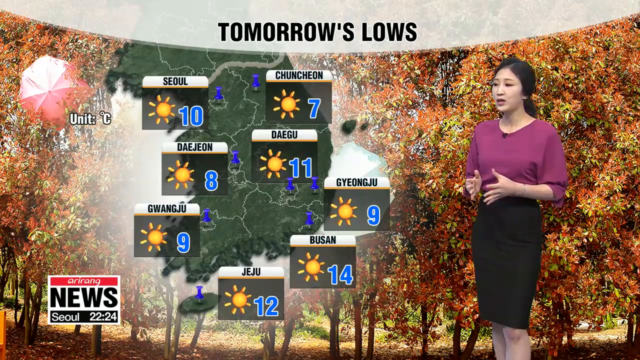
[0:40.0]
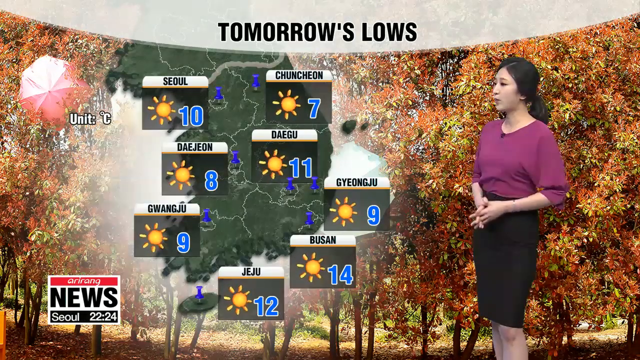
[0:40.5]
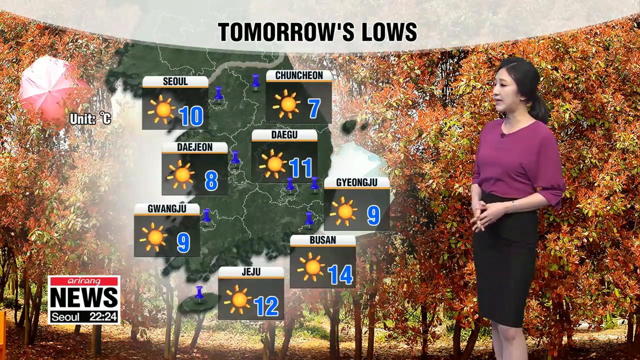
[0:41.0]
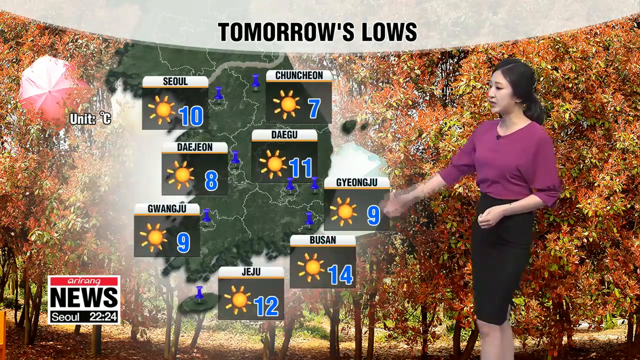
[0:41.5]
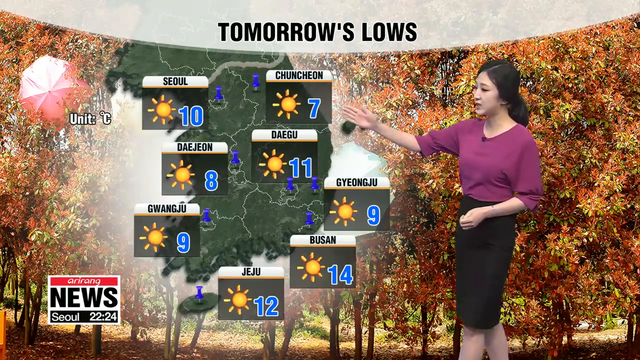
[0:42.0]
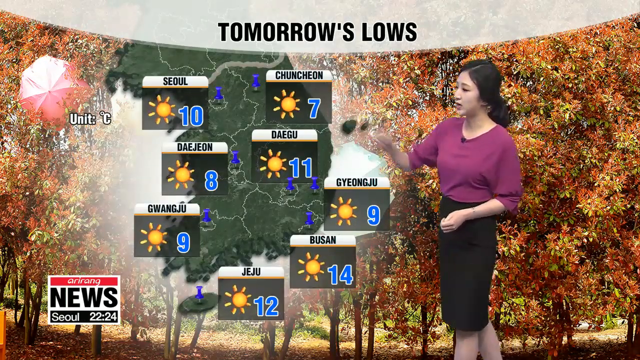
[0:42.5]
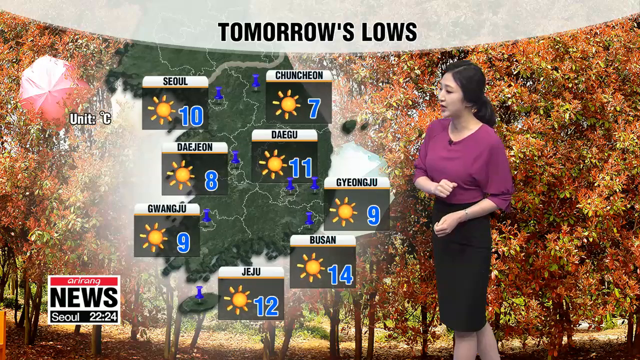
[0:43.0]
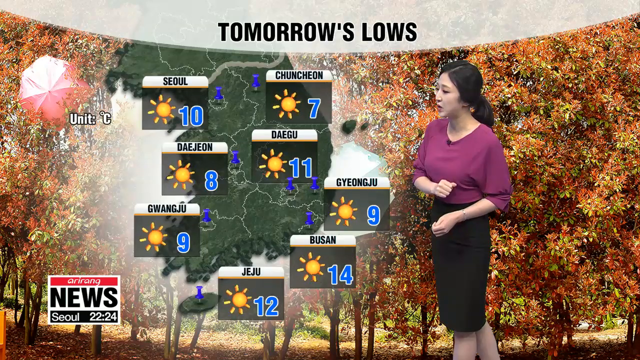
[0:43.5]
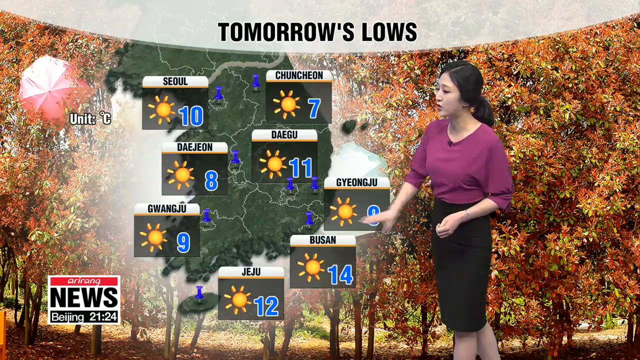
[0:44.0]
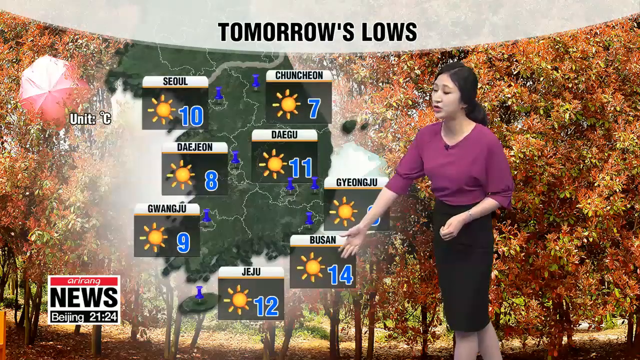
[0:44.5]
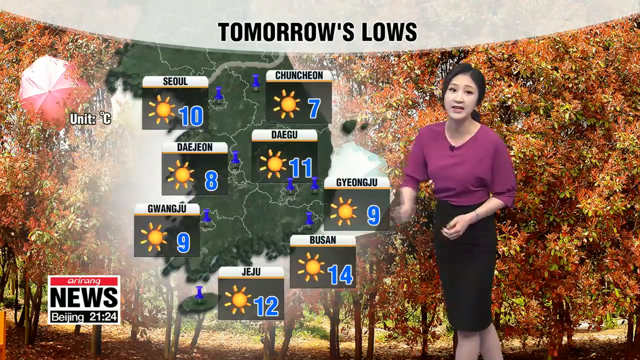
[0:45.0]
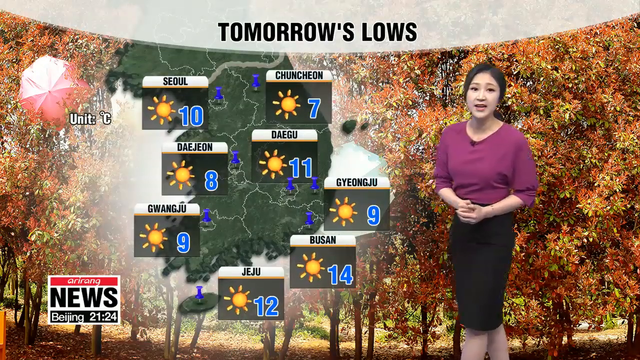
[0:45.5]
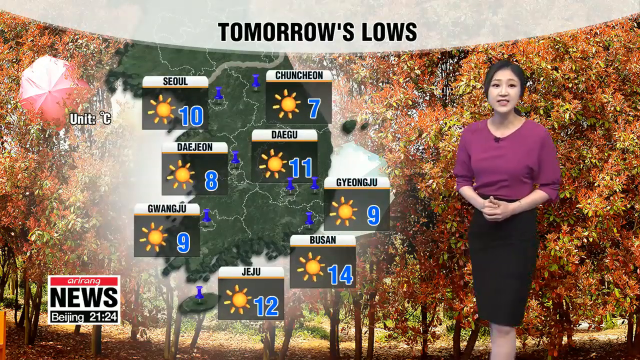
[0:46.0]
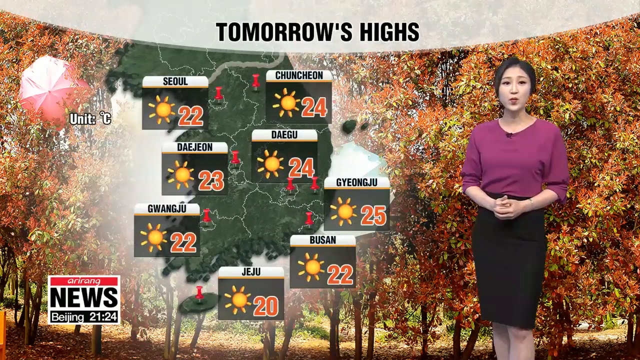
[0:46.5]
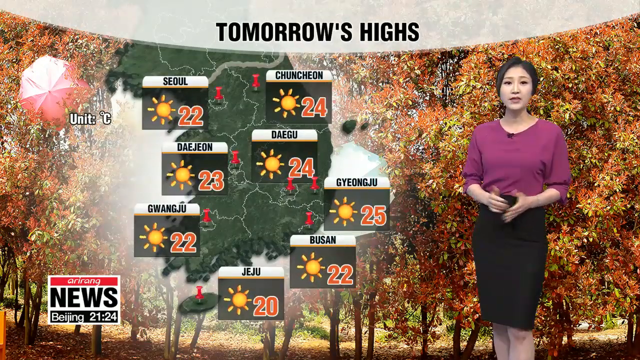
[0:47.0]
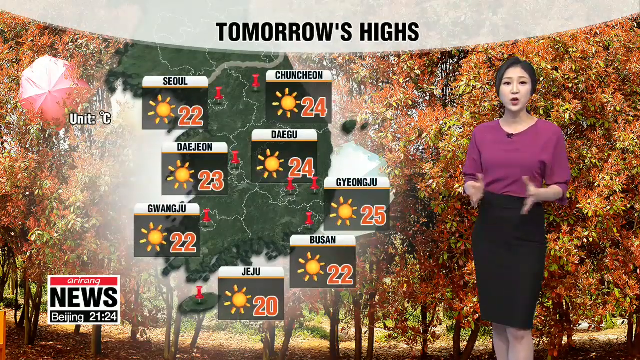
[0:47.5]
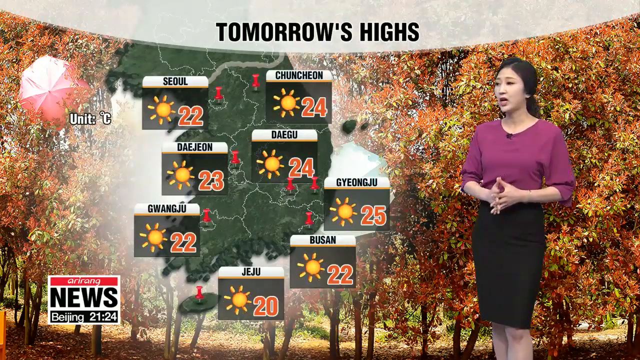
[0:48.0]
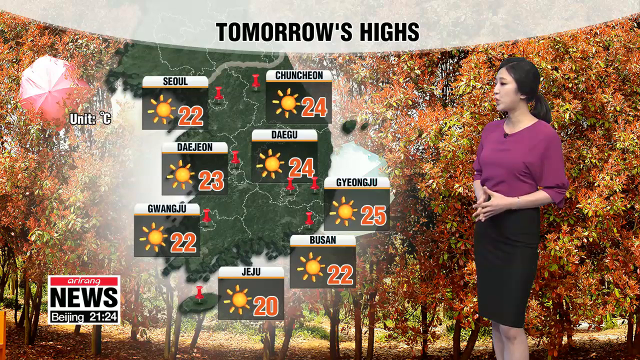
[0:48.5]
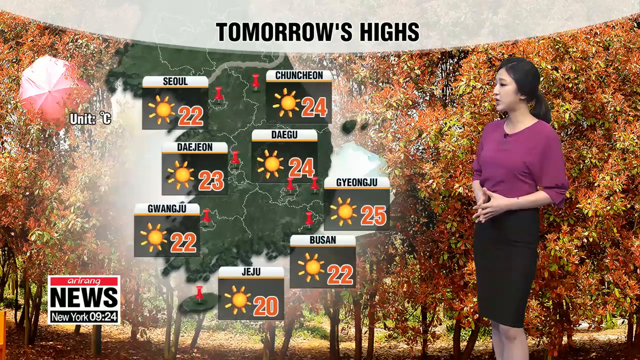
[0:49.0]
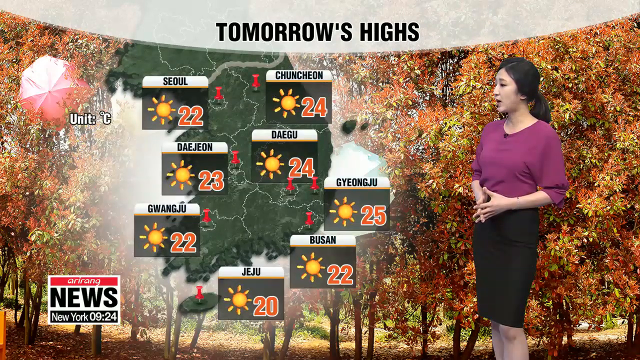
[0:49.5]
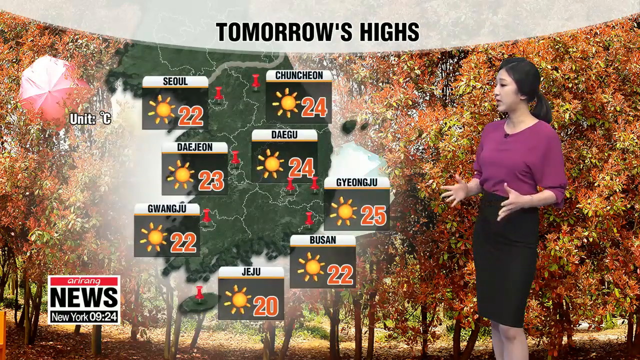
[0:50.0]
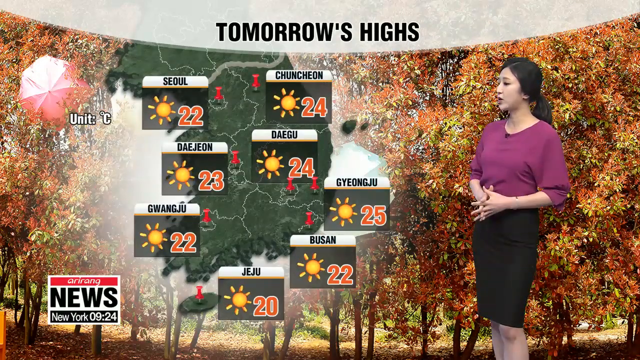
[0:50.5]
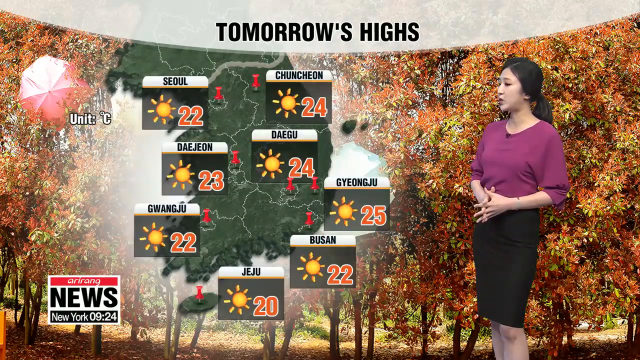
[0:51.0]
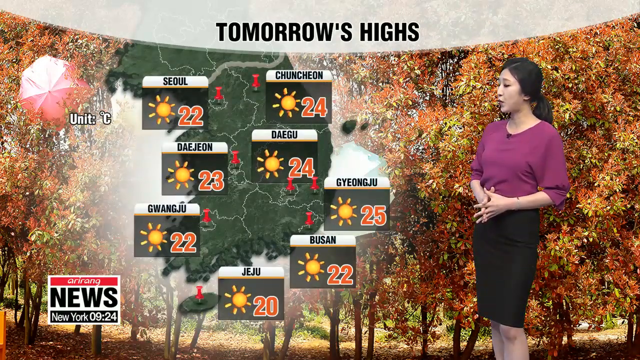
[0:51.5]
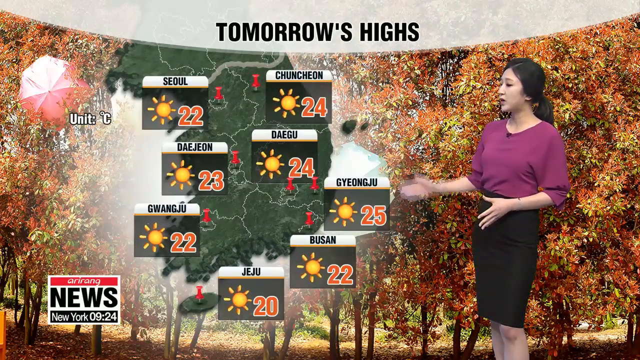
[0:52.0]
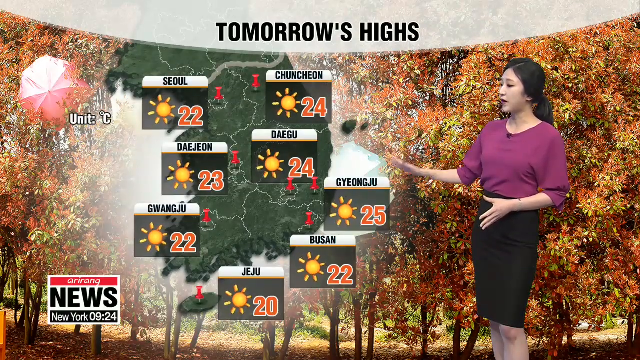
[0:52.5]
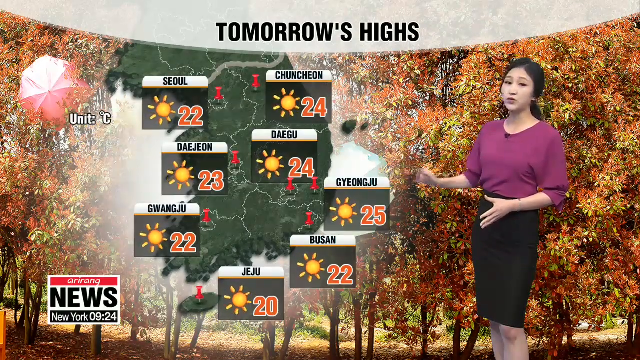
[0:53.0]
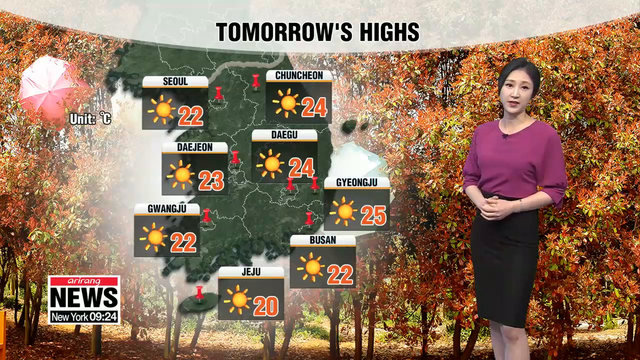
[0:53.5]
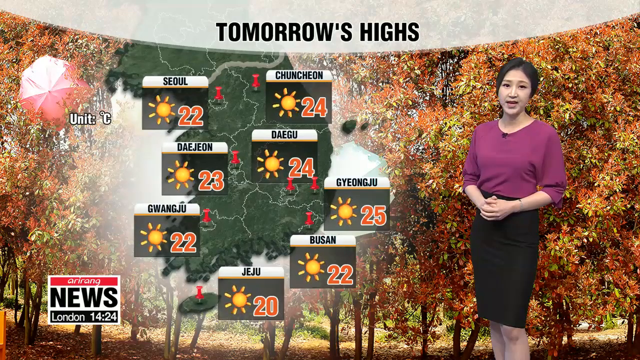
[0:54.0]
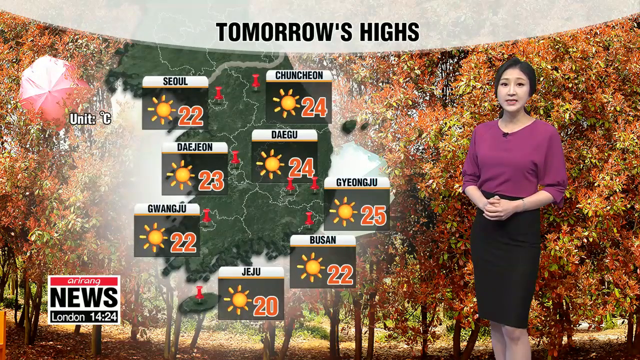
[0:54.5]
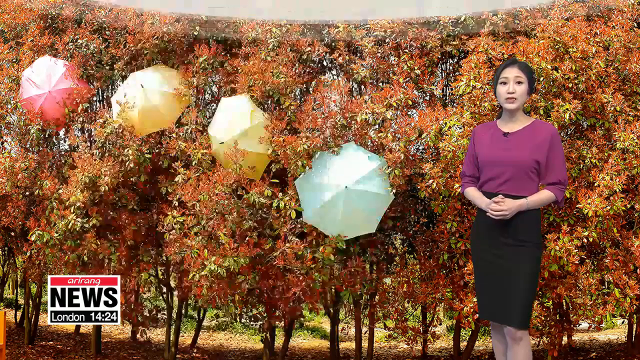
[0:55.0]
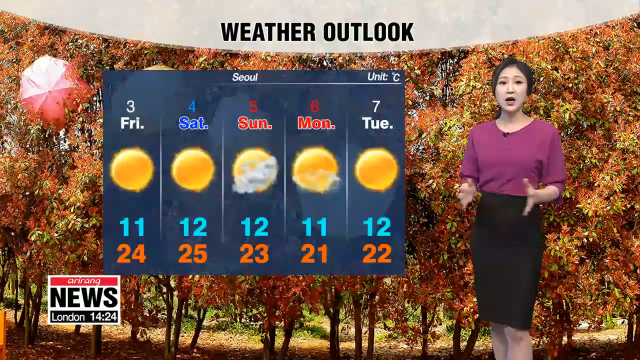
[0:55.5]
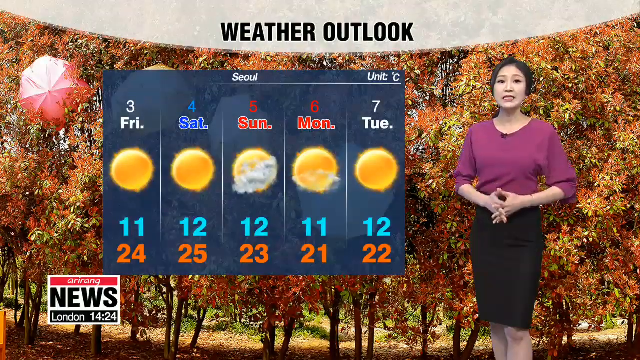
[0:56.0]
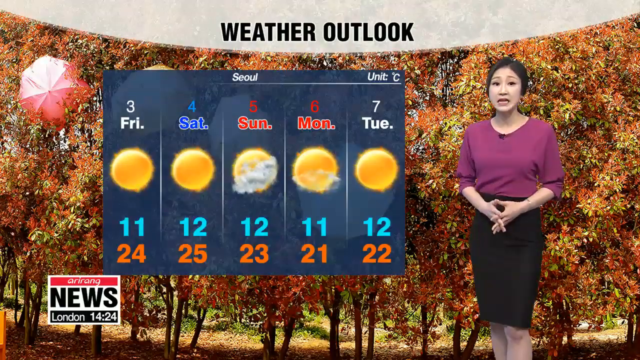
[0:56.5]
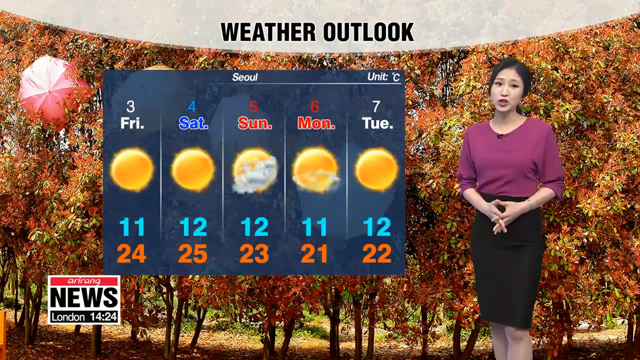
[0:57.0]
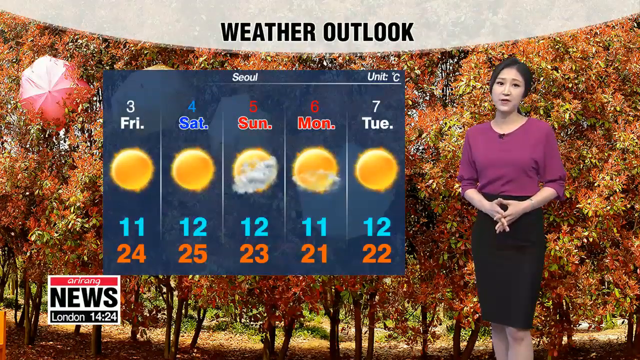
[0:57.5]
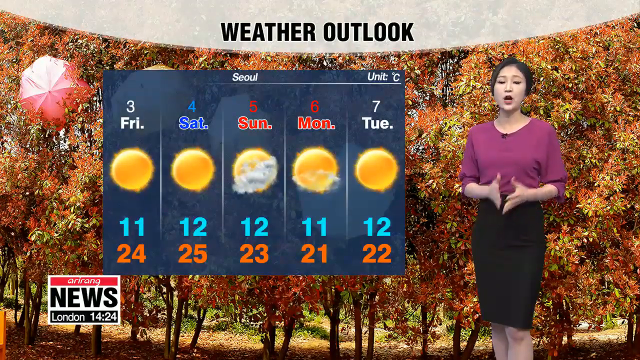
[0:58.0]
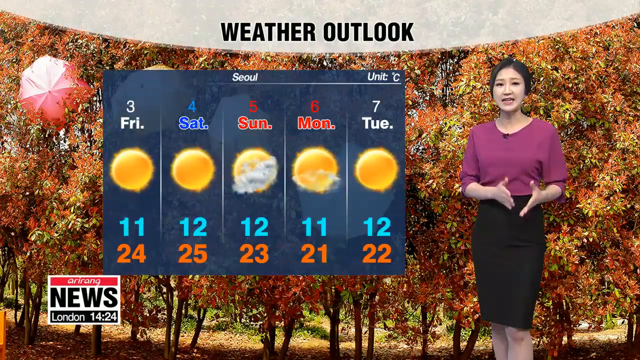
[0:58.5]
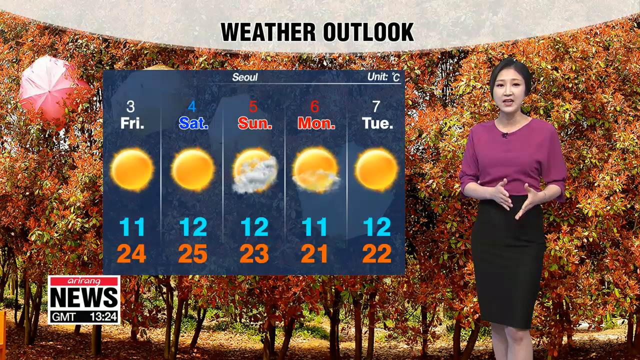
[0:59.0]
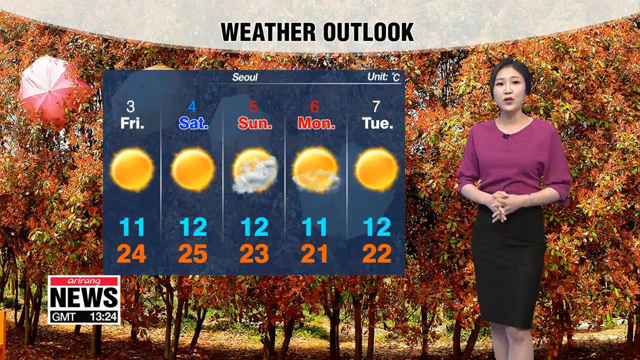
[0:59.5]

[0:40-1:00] Every so often the woman turns, and she has her hands clasped for a moment. She points with her right hand to Chunshin, and a small blue thumbtack shows where it is located within the region. Lines seem to outline the provinces or jurisdictions. The locations go in a U-shape: apparently about four closest to the viewer, Juju at the bottom, and three others on the left side. The unit of measurement reads "unit C" for Celsius. The sun icon moves like gears, its rays apparently turning counterclockwise. Tomorrow's highs are shown in red and lows in blue. A weather outlook has "Seoul" at the top and shows days 3 through 7, Friday, Saturday, Sunday, Monday and Tuesday, abbreviated. Friday, for instance, shows full sun with a picture of a sun, with the low listed first in blue underneath it and the high in orange.